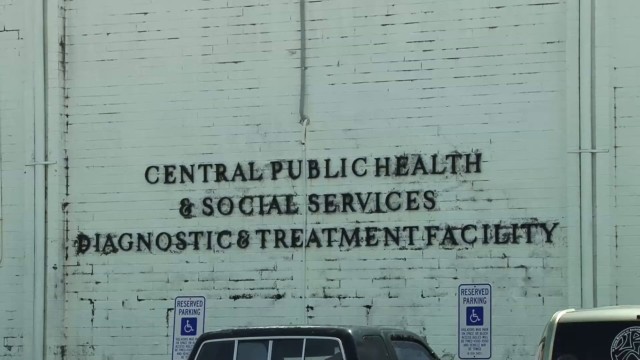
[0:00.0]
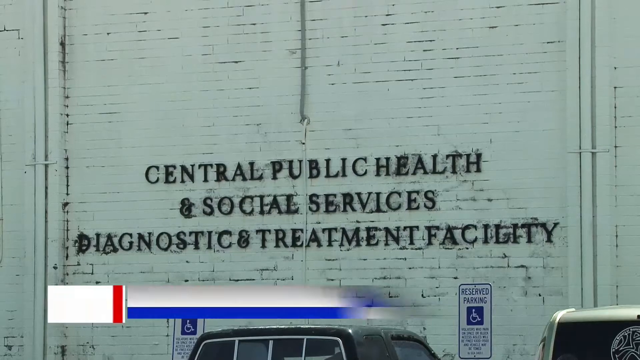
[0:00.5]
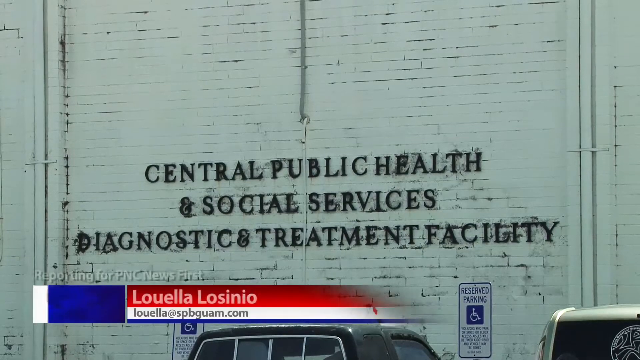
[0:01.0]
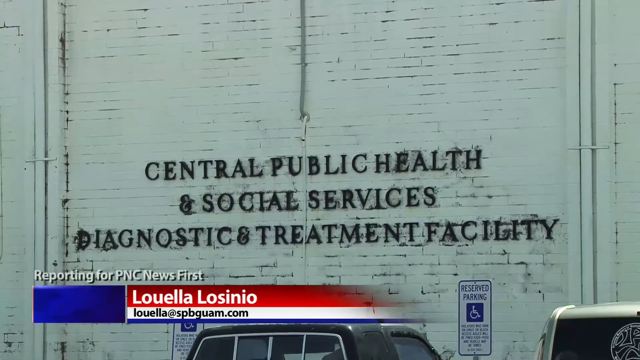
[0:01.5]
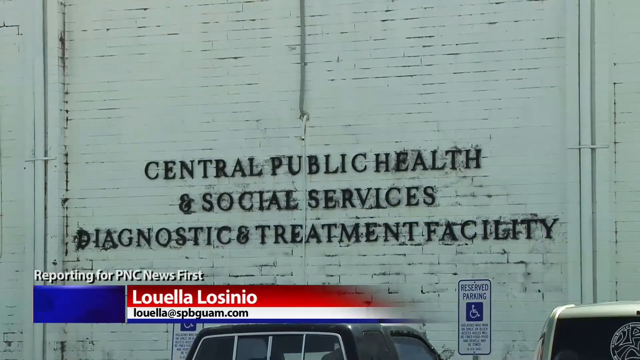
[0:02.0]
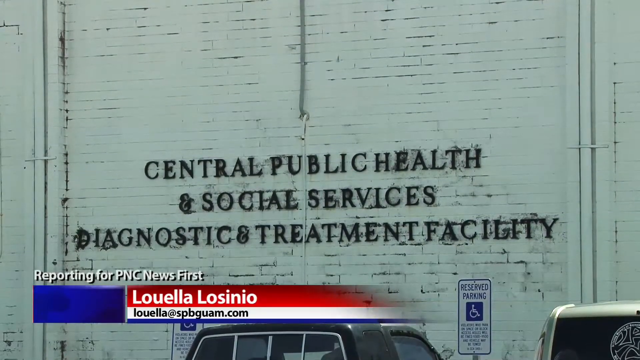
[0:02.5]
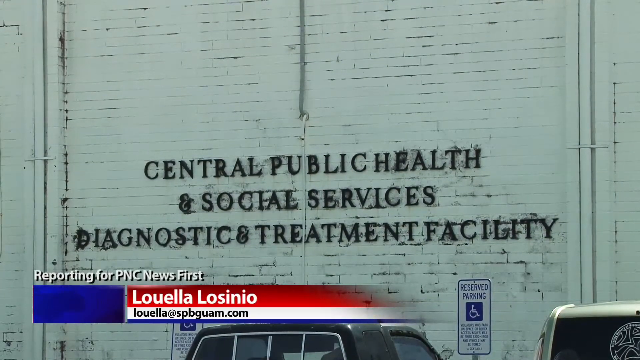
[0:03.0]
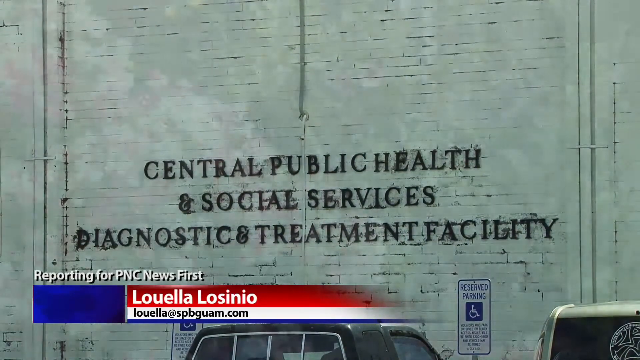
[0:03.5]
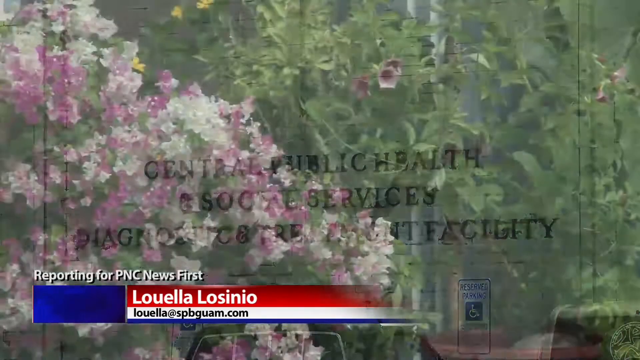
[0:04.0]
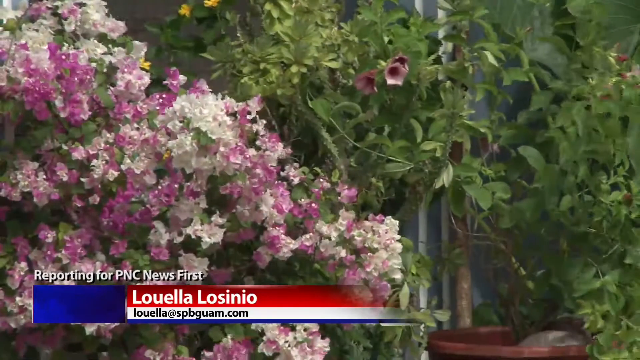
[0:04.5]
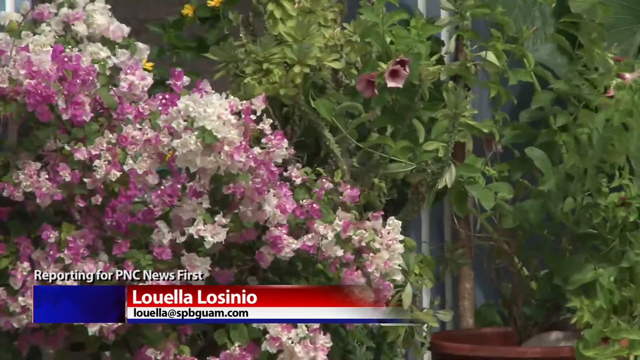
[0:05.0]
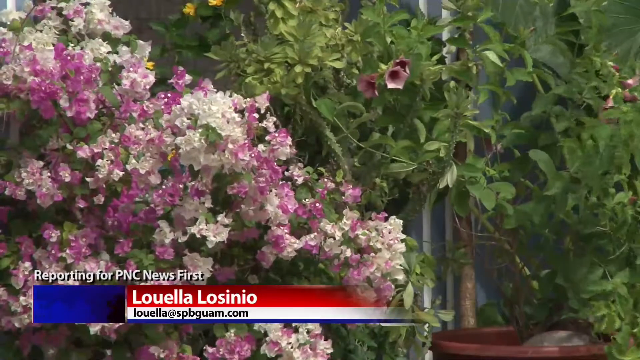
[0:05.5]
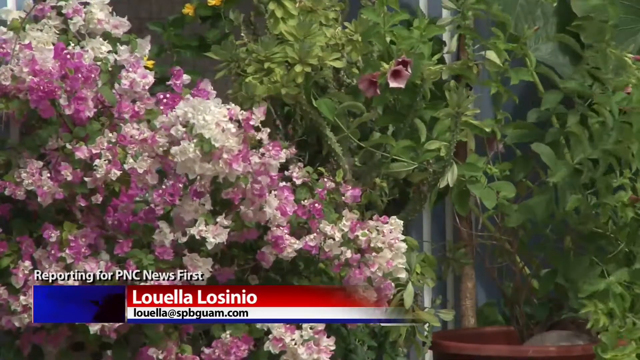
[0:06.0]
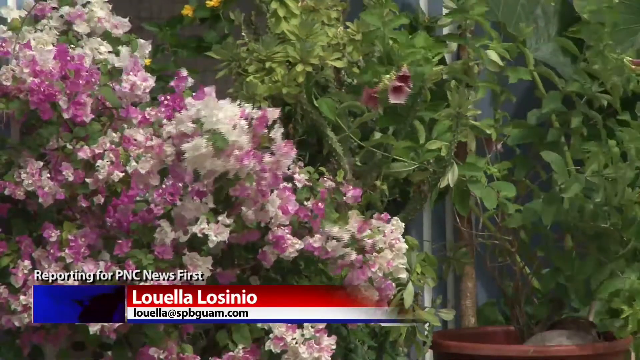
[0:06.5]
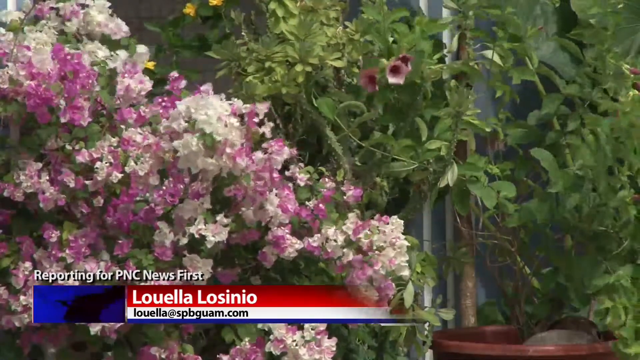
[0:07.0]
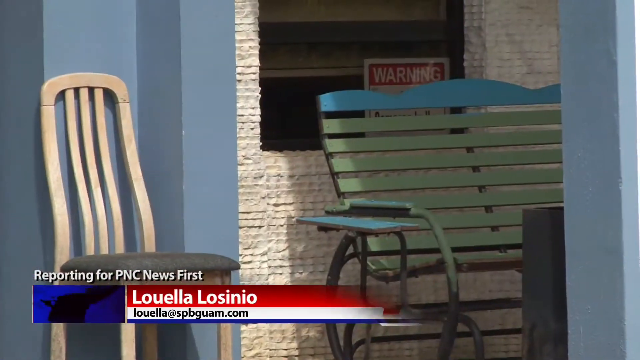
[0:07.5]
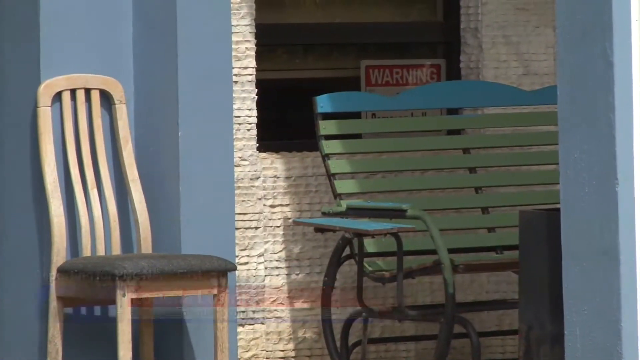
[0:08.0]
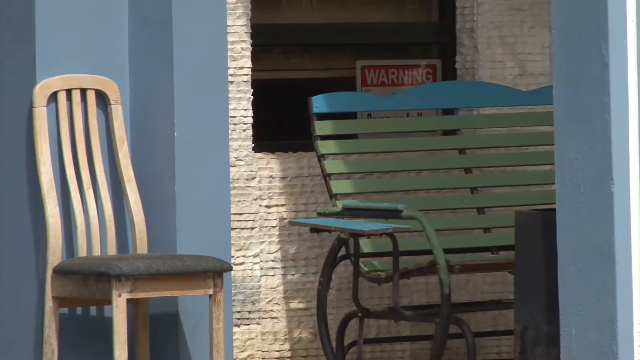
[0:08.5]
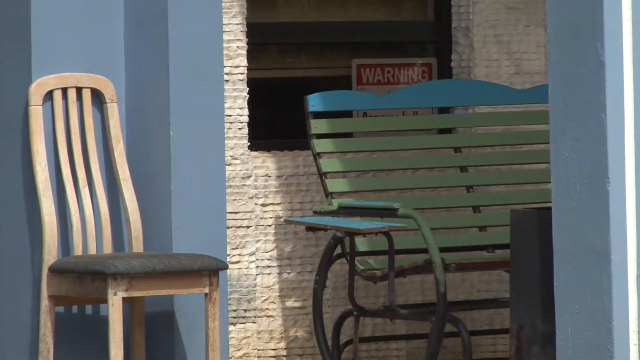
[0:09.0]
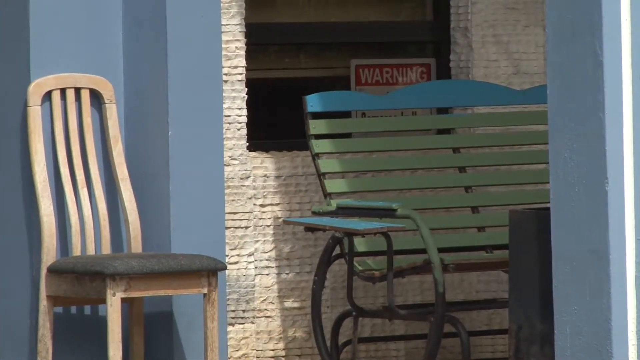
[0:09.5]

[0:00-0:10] The outside of a building is shown, with the name on the building reading "Central Public Health and Social Services Diagnostic and Treatment Facility." The building appears to be in the USA. This is a news report: the news reporter's name is at the bottom of the screen, and the text says they are reporting for "PNC News First." The video moves through a number of different scenes of the outside of what is apparently this public health center. There is a waiting area, and a parking lot with signs reserving spaces for handicapped parking. Out front there is a waiting area with a bench and a chair.